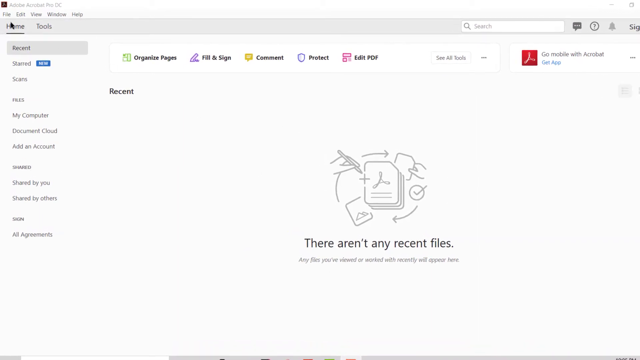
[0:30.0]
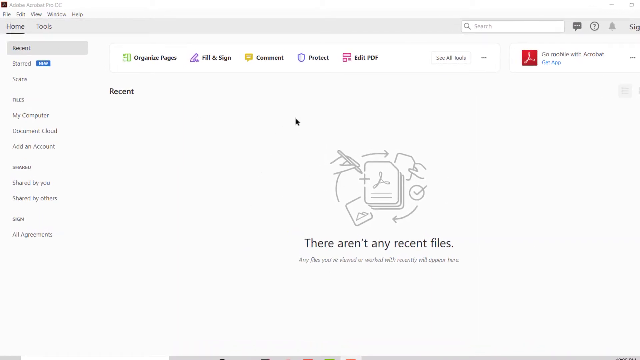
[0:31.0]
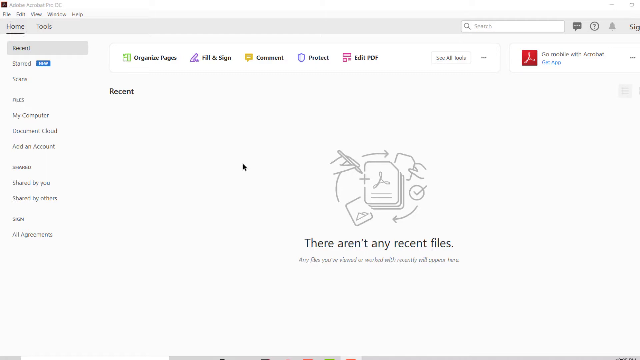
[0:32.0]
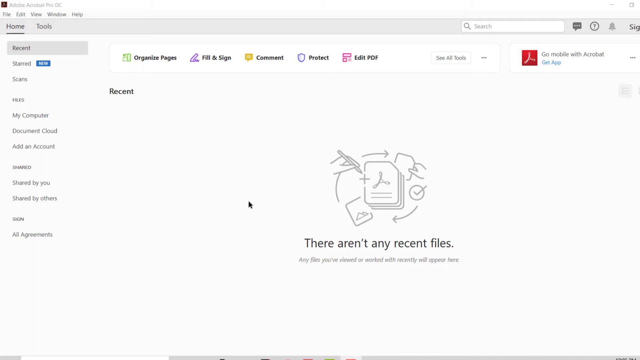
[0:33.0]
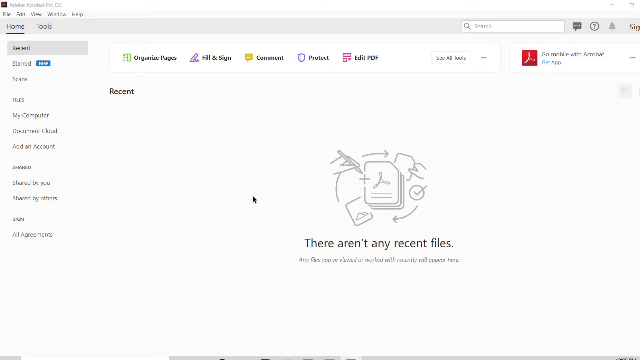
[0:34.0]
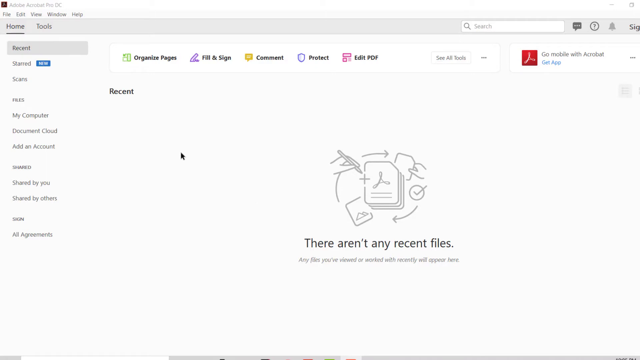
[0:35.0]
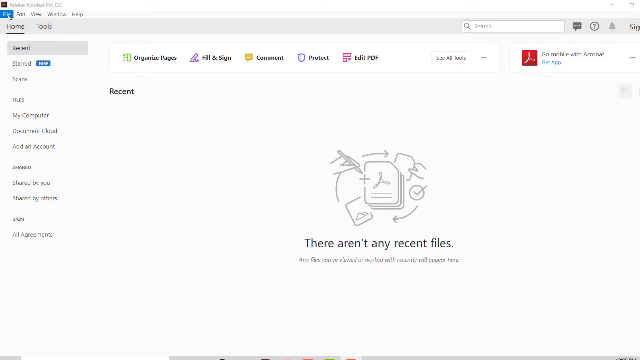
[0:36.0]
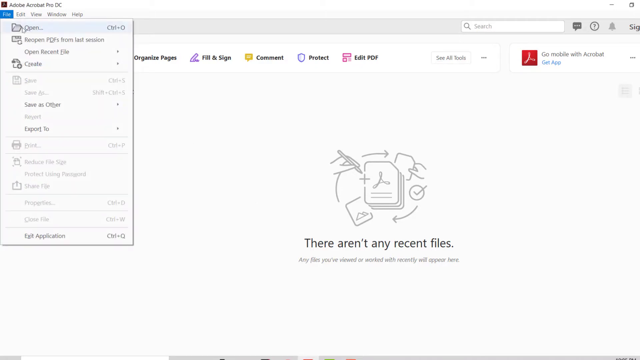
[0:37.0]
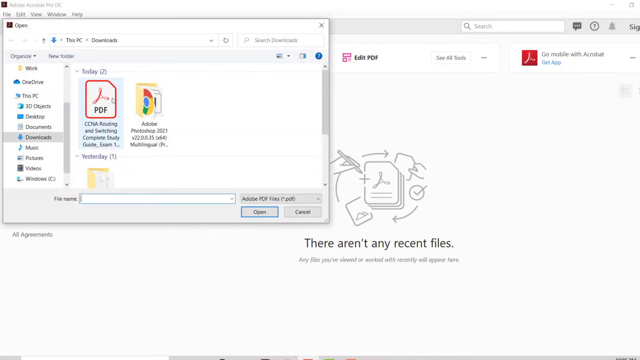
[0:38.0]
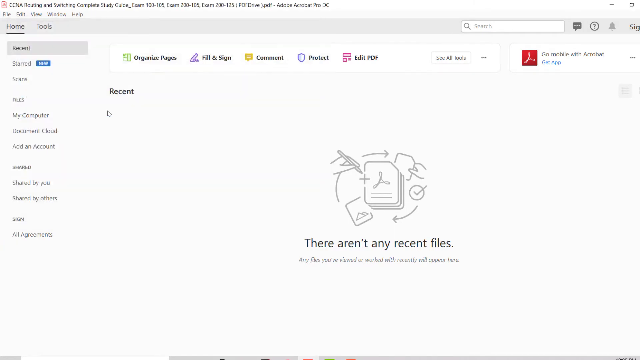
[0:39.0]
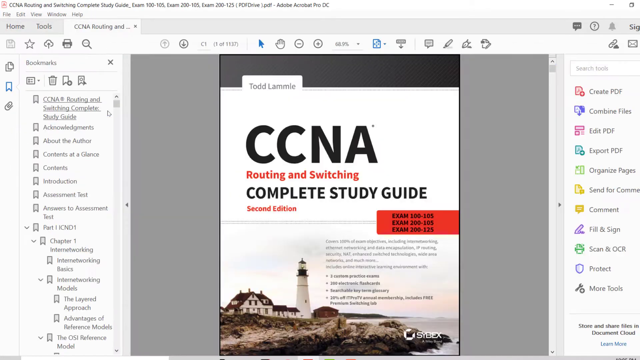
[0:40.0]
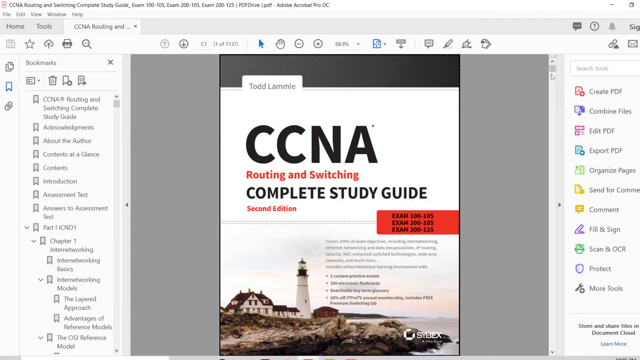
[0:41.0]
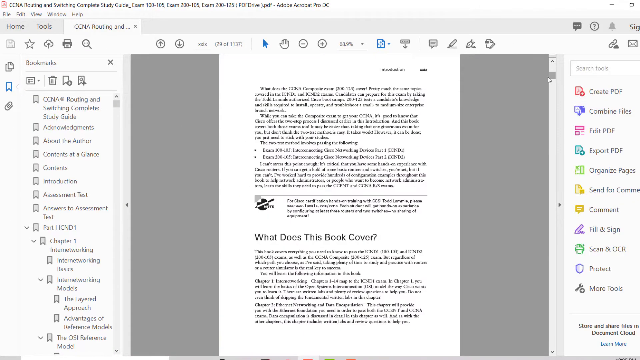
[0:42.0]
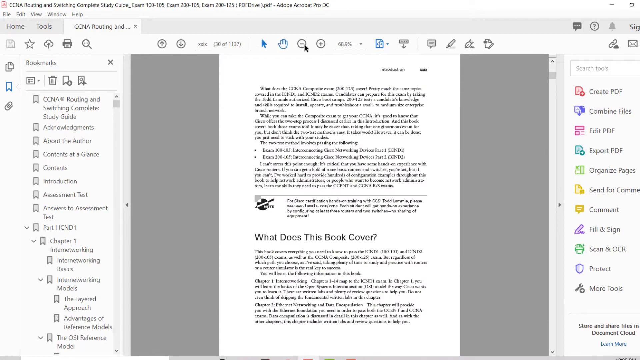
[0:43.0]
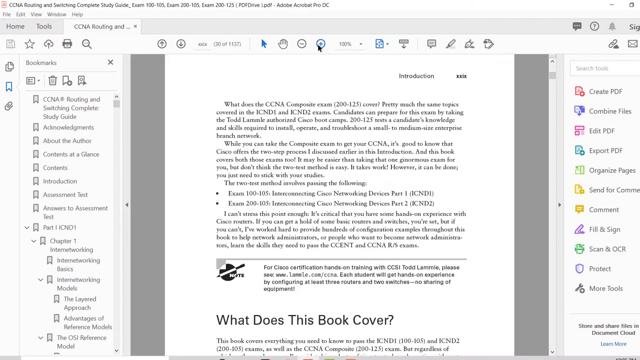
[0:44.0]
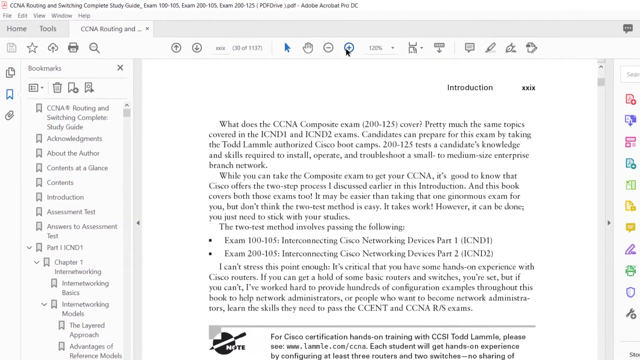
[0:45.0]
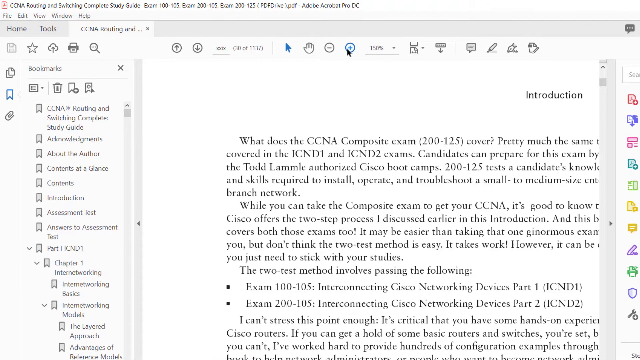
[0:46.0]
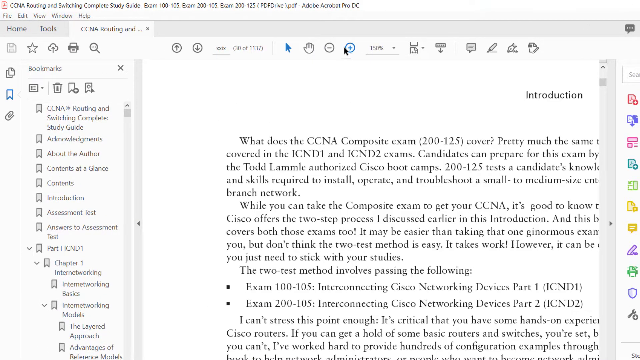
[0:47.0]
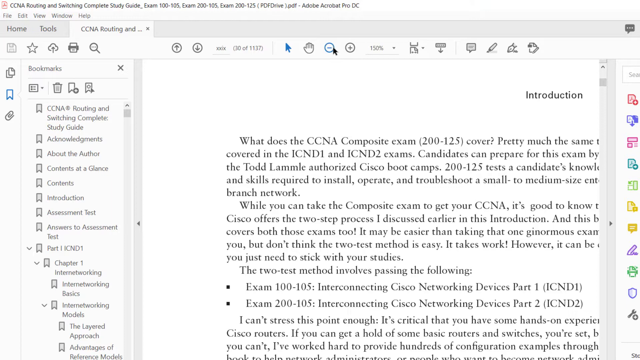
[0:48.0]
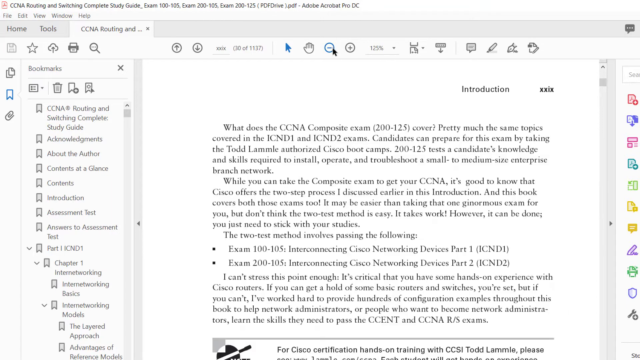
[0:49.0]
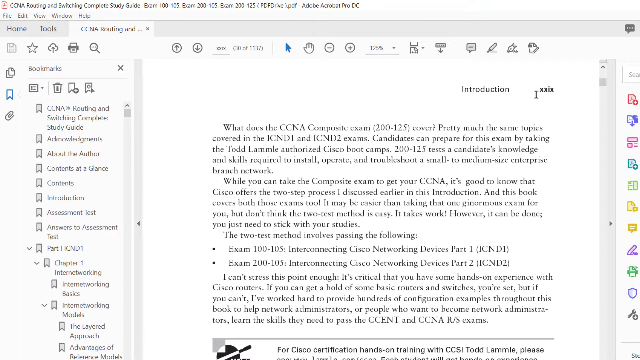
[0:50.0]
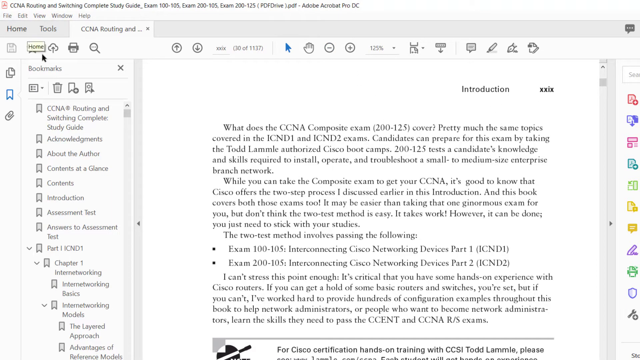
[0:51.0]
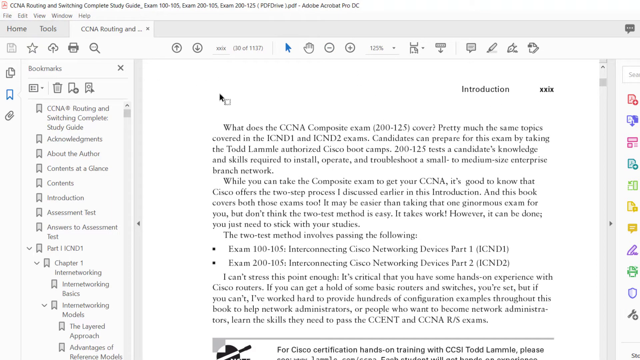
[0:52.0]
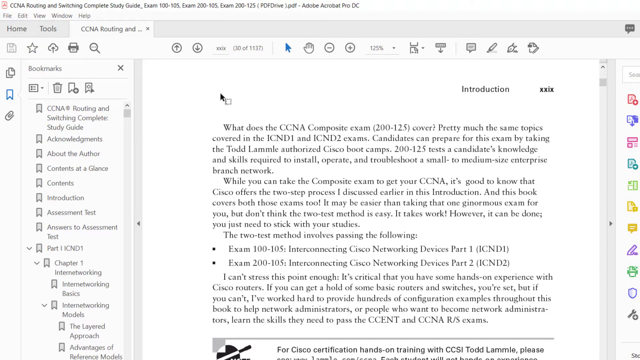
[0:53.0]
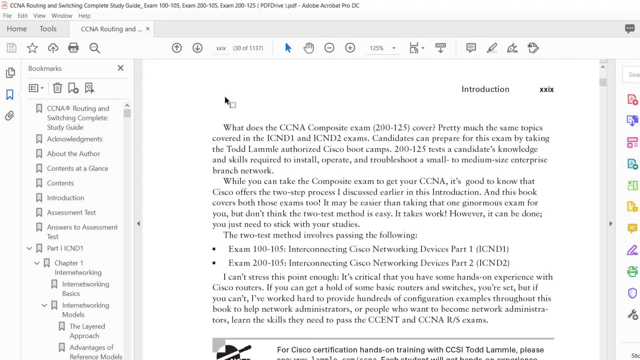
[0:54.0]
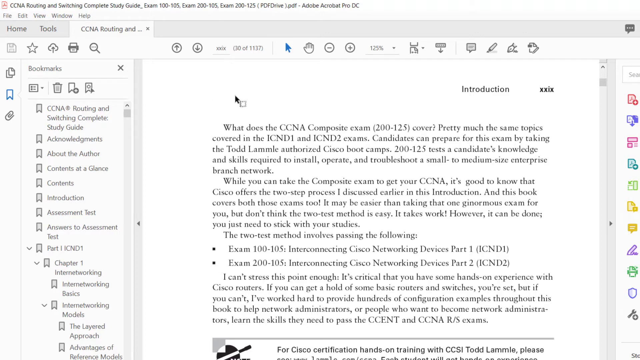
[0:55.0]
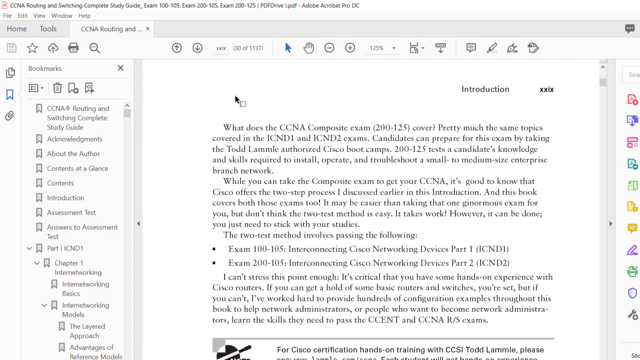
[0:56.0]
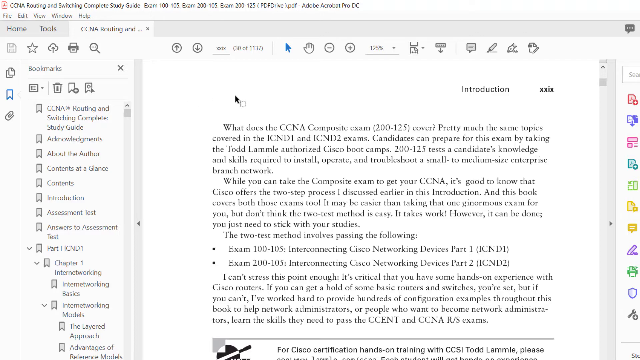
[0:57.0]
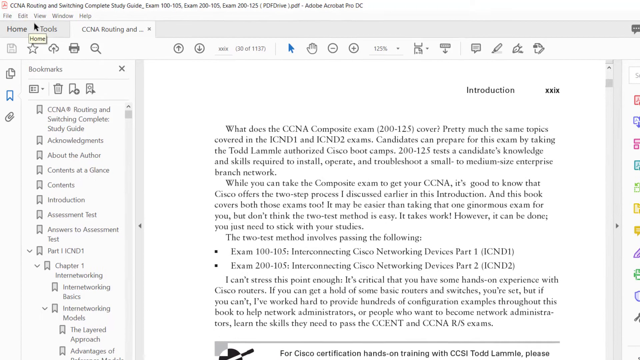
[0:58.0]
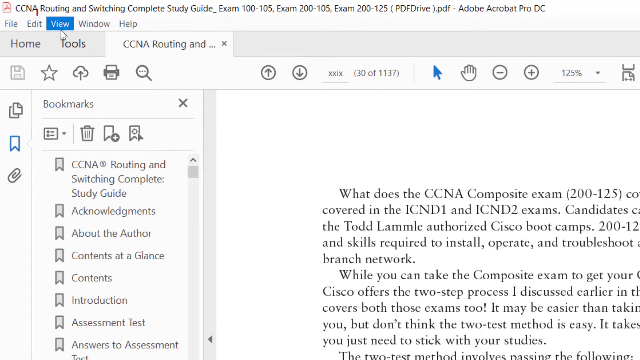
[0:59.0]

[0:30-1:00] The black pointer moves around the middle of the screen, then goes to the file tab in the top left corner, which turns blue and is clicked. The open folder is clicked next. A new box pops up, and the PDF logo is highlighted blue and clicked. A document appears on screen reading "CCNA" in black letters, "routing and switching" in red beneath it, "complete study guide" in black below that, and "second edition" in red under that. The pointer clicks the plus button several times, zooming in on the text, and then the minus, or zoom-out, button is clicked once, showing 125%. The pointer is at the top left. The view then zooms in on the view button, which is inside a blue rectangle and bordered on the outside by a red box.